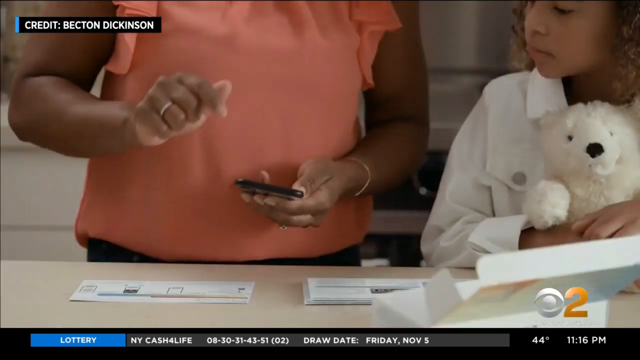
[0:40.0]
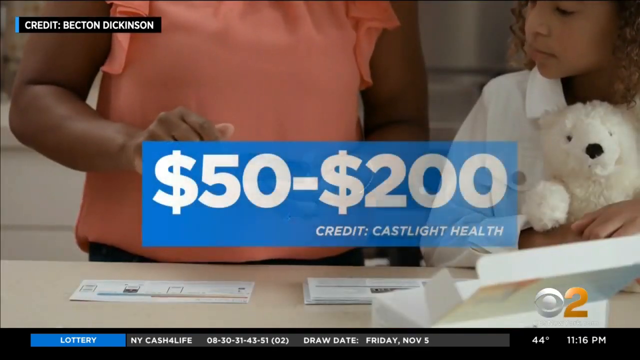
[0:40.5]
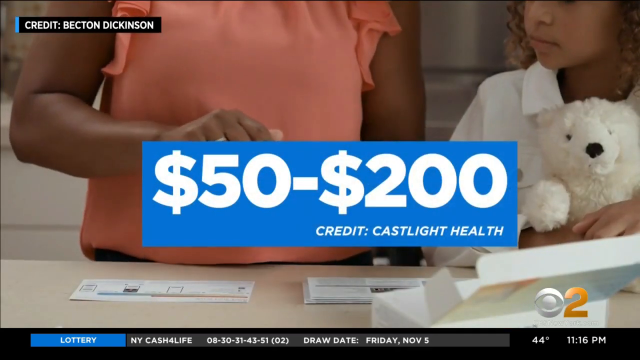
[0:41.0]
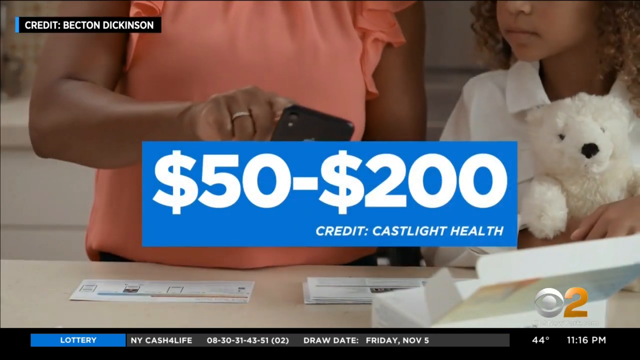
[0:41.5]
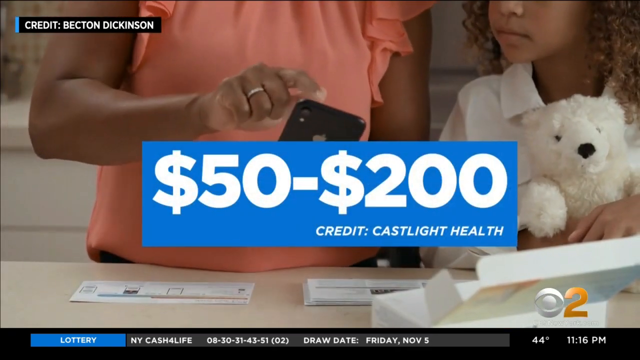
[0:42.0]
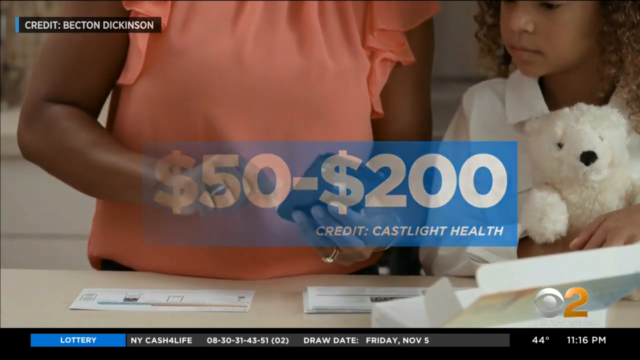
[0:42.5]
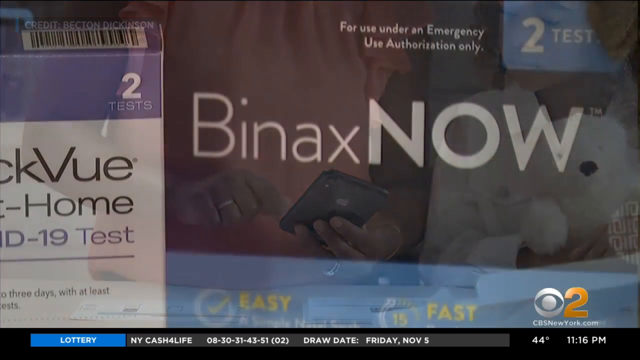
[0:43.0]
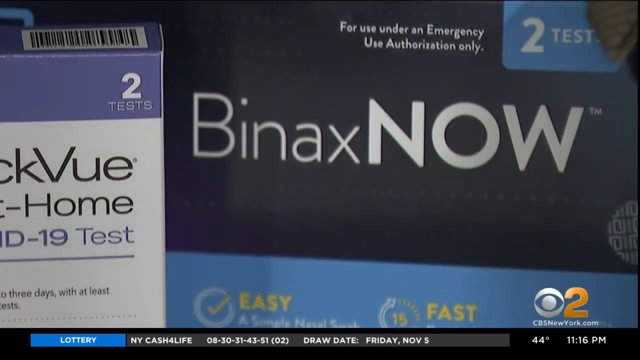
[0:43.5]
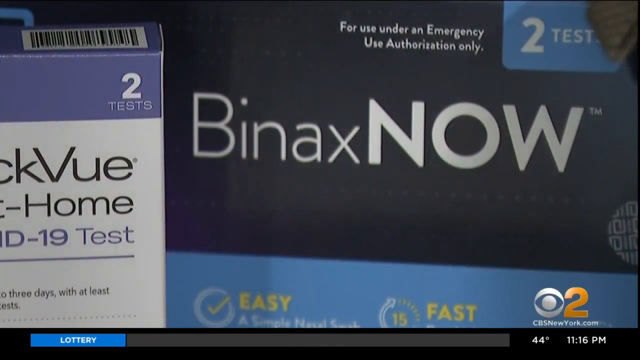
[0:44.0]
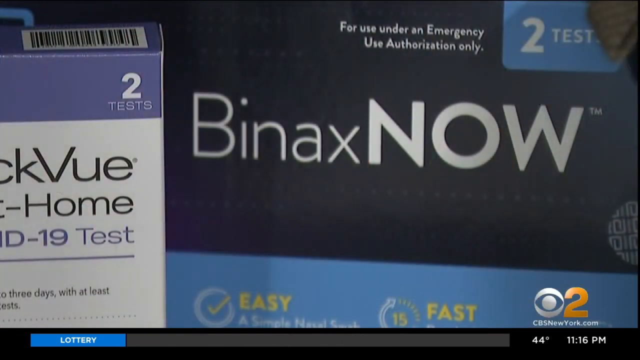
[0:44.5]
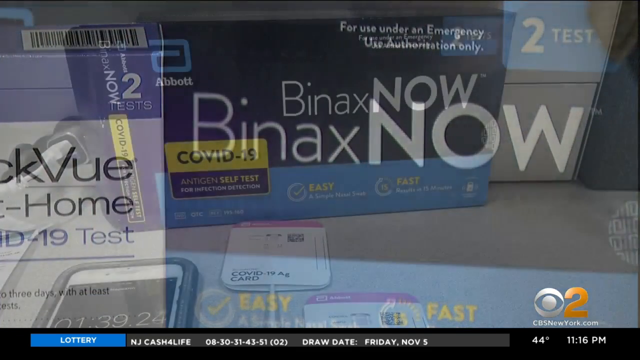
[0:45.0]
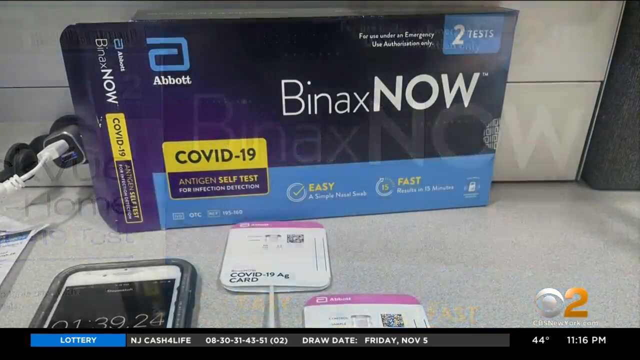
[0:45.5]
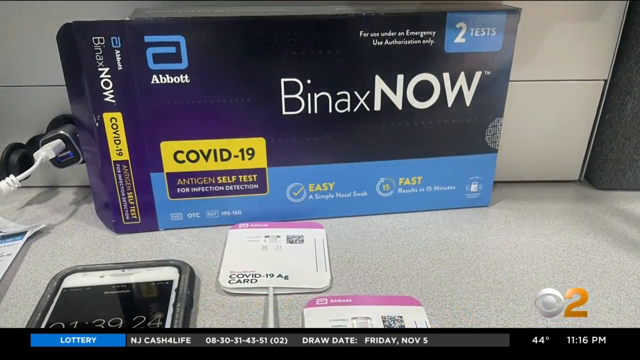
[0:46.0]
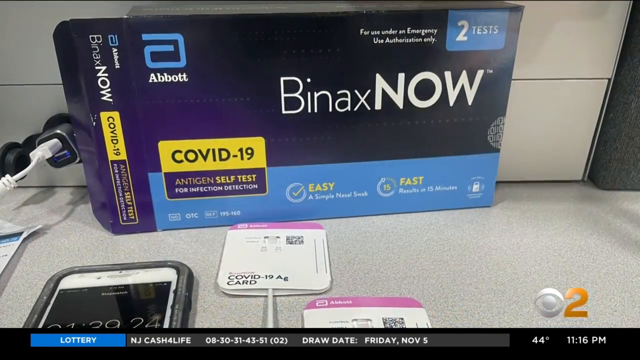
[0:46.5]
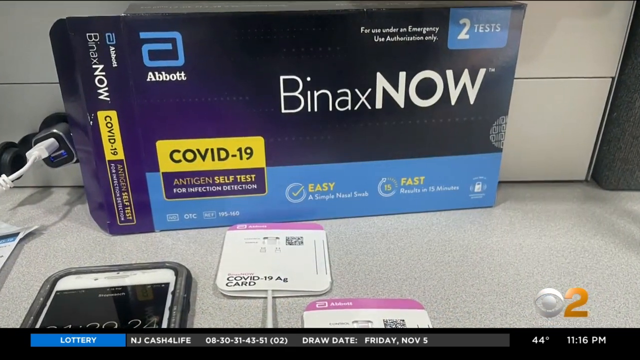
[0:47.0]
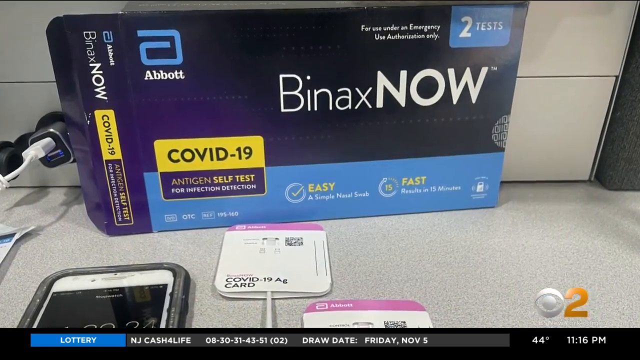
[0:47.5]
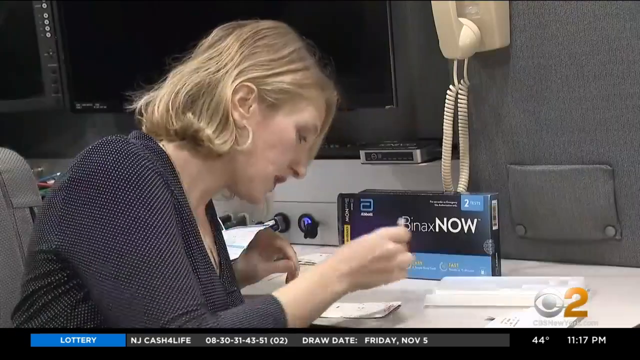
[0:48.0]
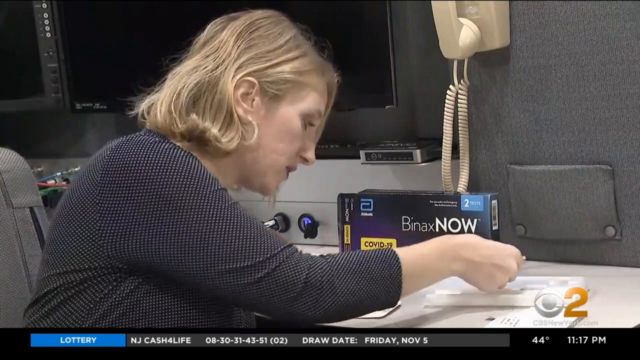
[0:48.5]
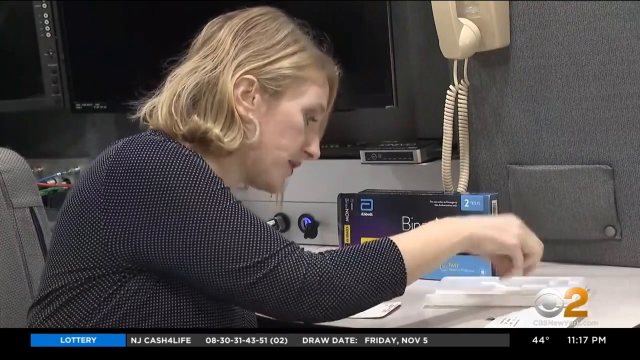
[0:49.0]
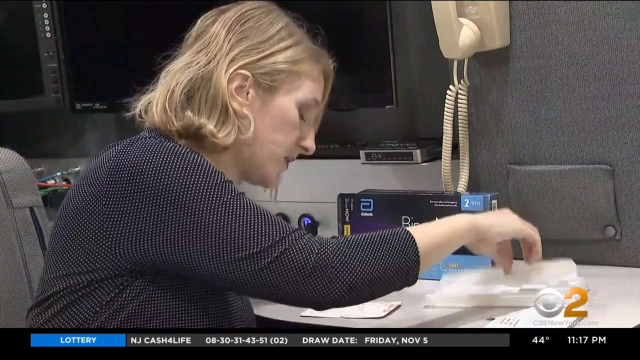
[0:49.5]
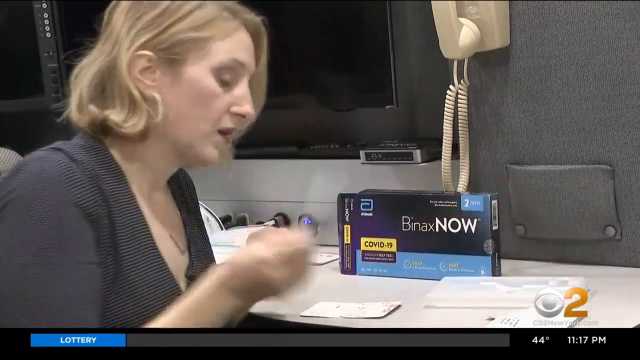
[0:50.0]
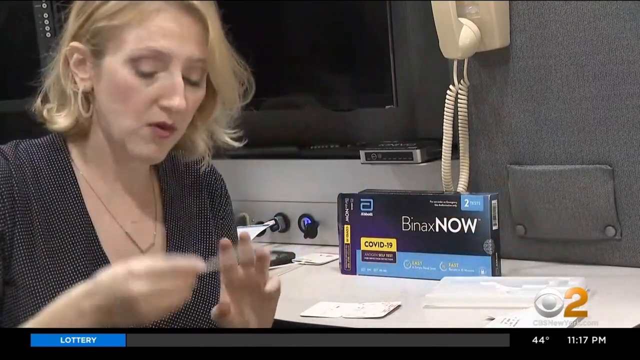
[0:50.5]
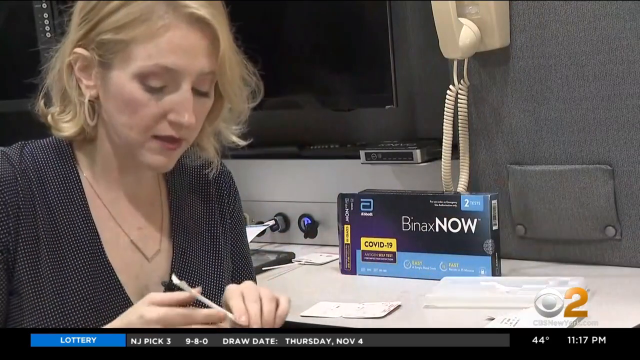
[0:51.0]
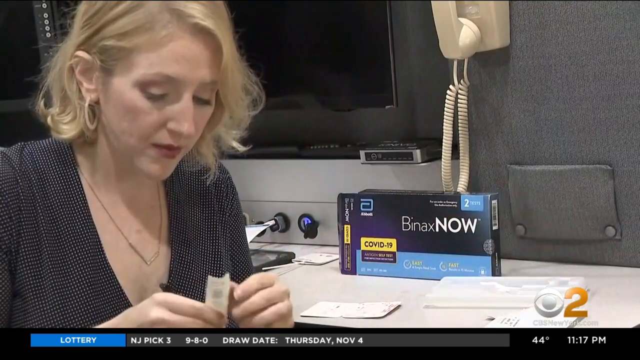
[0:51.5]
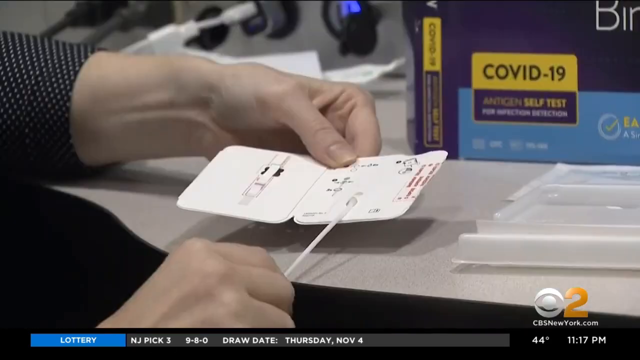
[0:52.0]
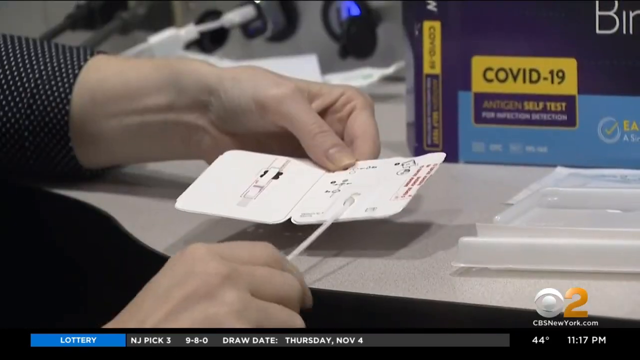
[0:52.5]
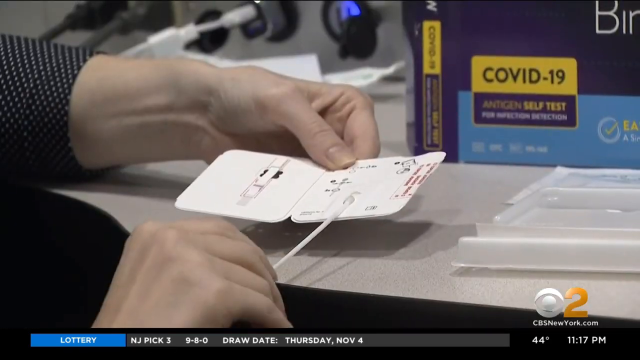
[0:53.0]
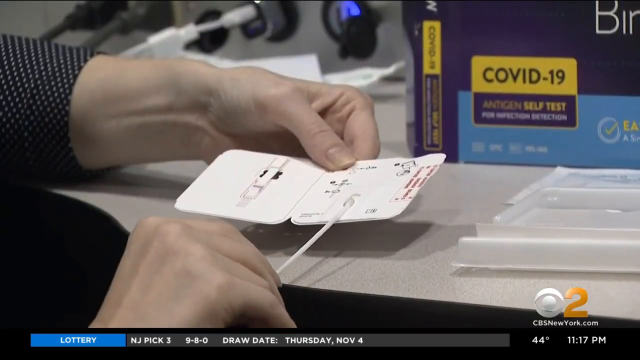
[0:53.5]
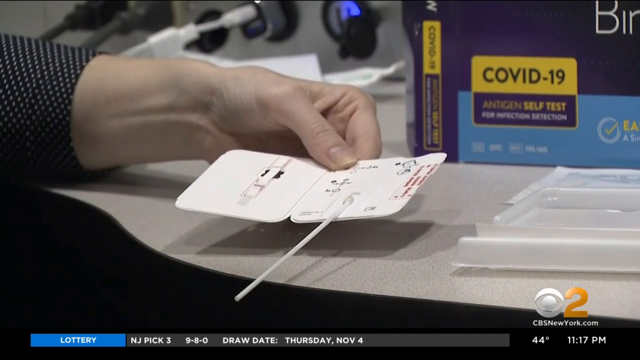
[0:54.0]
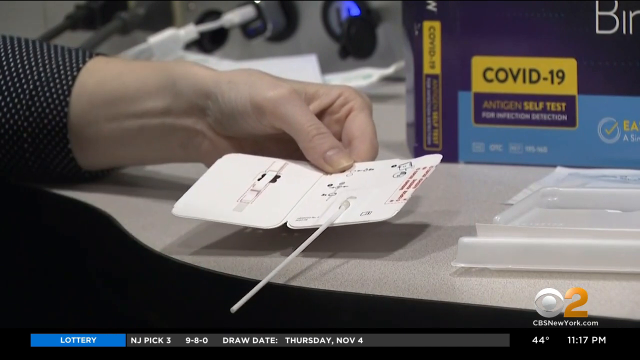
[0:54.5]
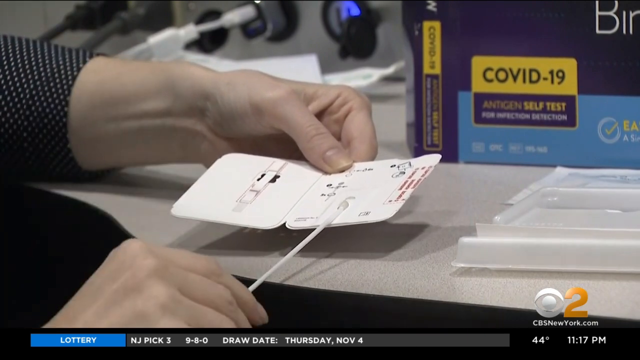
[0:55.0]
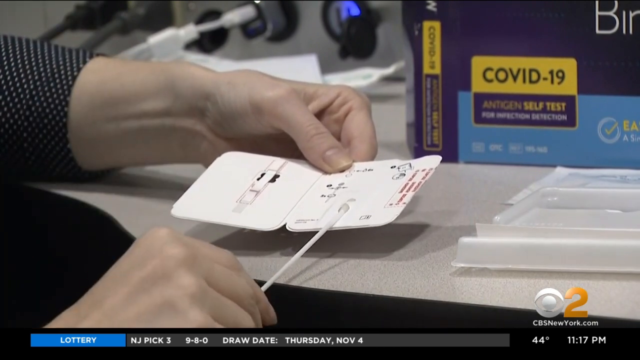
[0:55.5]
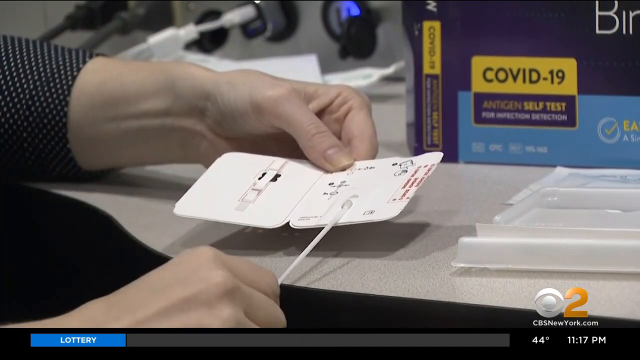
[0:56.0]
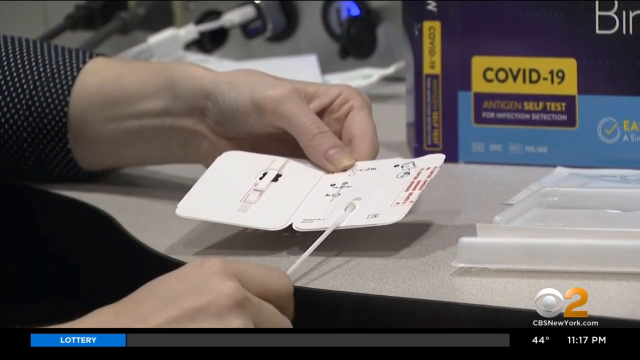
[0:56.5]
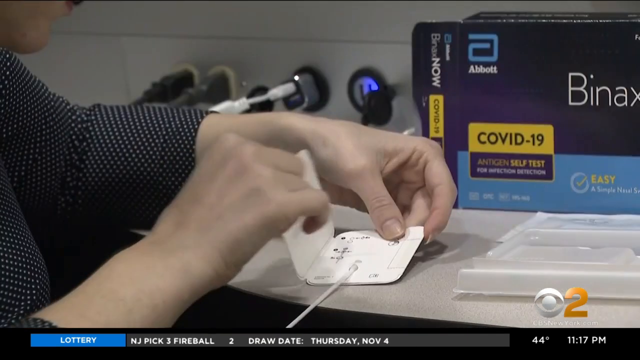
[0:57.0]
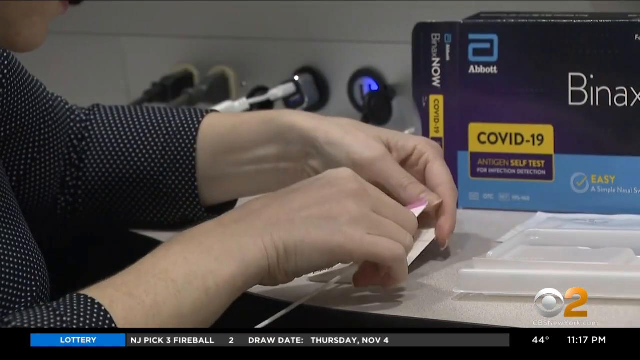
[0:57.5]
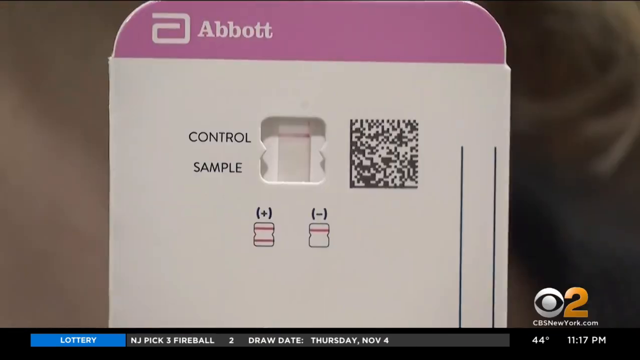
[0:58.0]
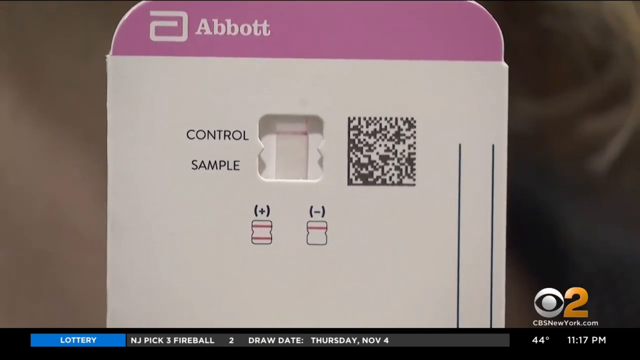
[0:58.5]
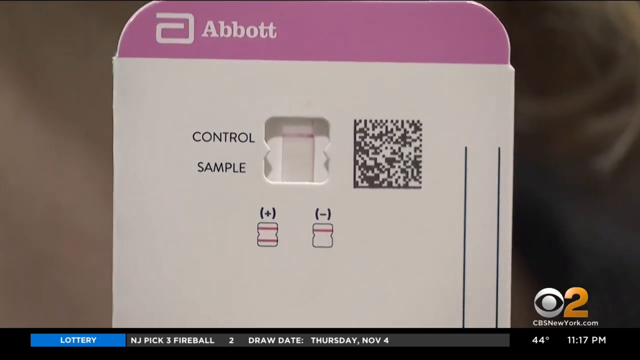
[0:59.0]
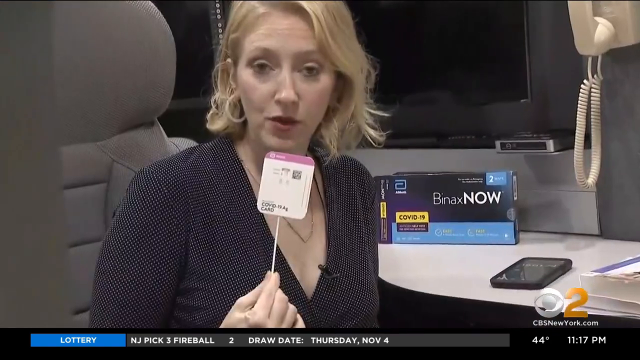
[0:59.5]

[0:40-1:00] Another close-up shows the BinaxNOW COVID test, now opened, with the box opened on the left-hand side and its contents on the table. A card reads "COVID-19 AG card," a cell phone is on the table next to the card, and a charger is on the left-hand side of the box. The video then goes to a woman showing viewers how to use the COVID test. She has all of the pieces out on a table, puts it together, then picks up the test and holds it up to show viewers what to do with it. She wears a black V-neck shirt and a necklace and has short blonde hair.